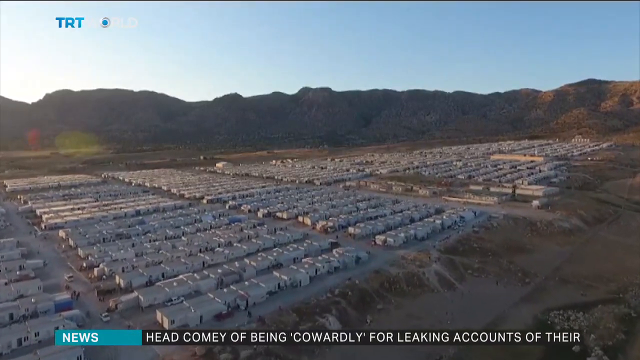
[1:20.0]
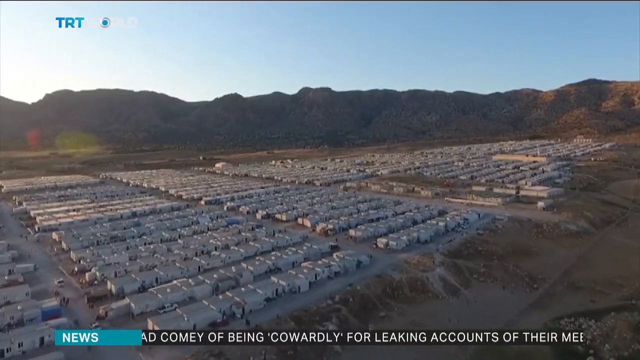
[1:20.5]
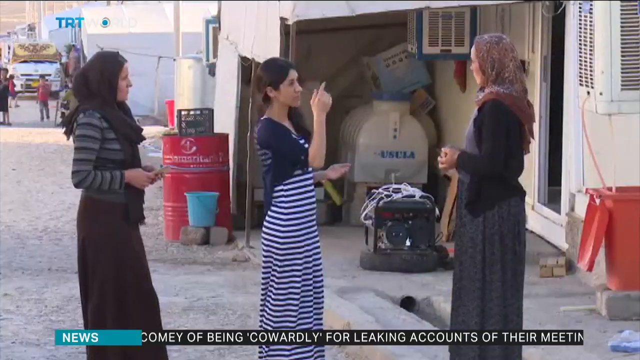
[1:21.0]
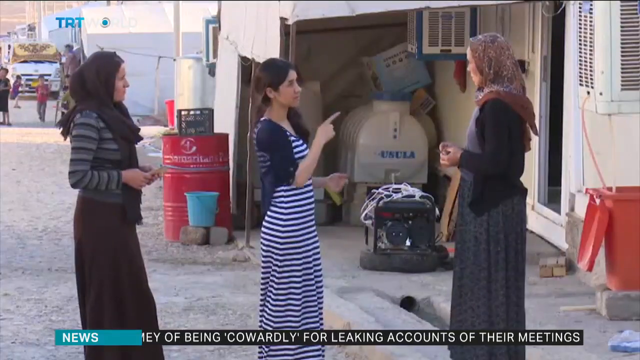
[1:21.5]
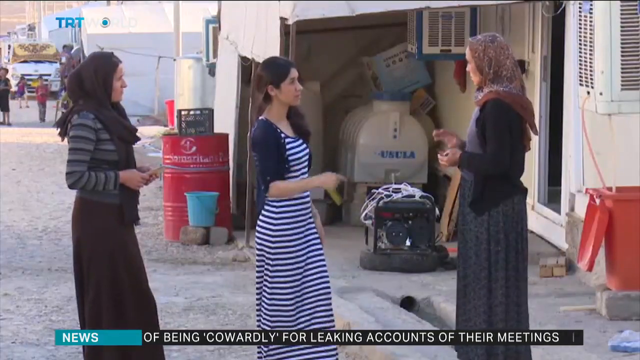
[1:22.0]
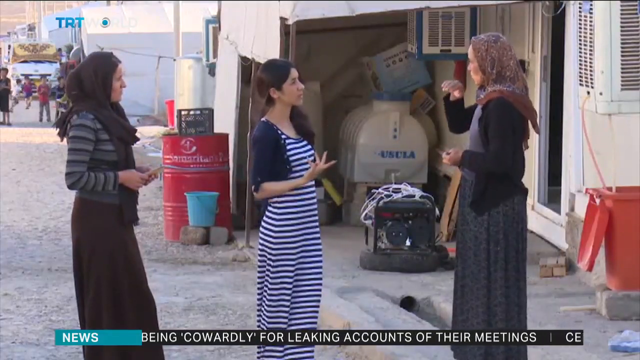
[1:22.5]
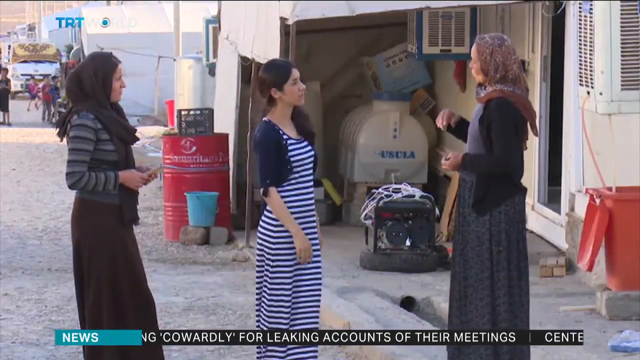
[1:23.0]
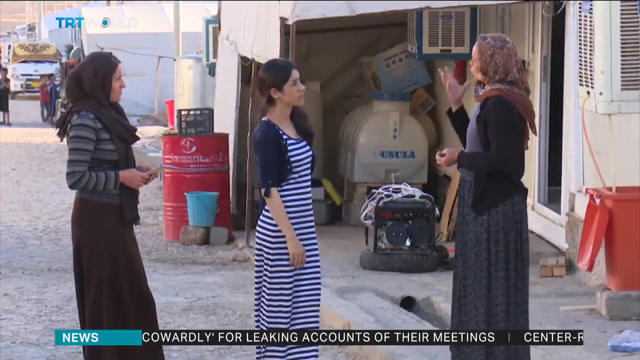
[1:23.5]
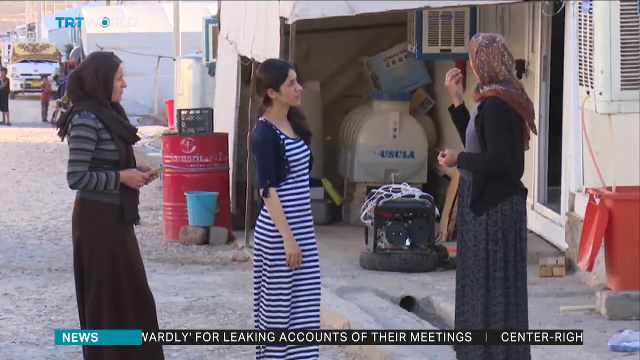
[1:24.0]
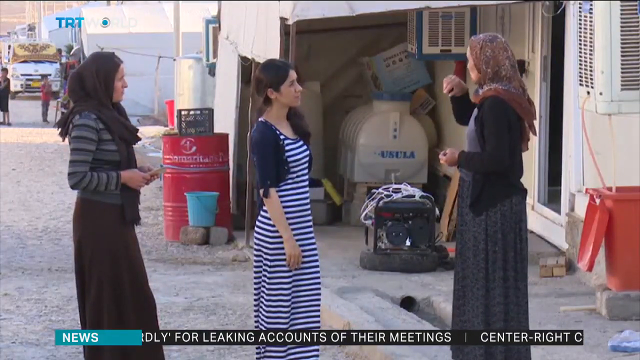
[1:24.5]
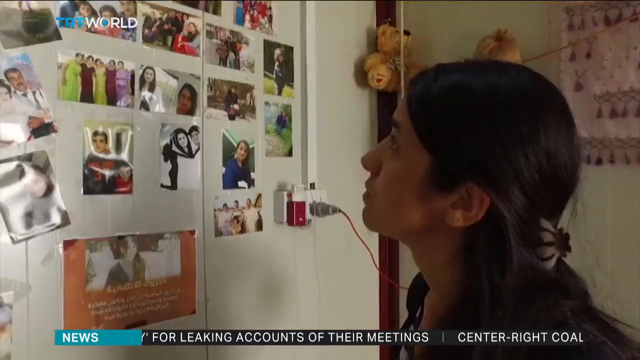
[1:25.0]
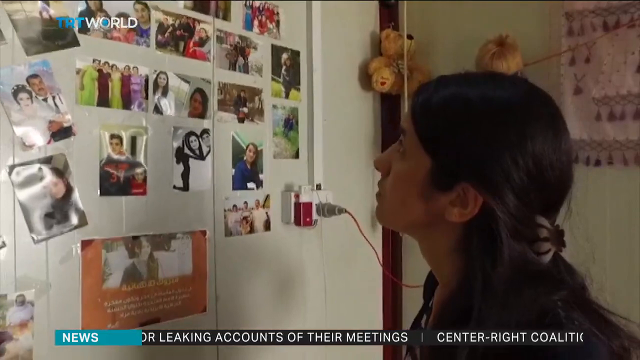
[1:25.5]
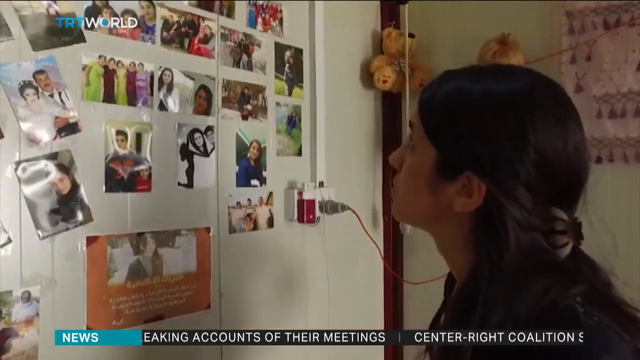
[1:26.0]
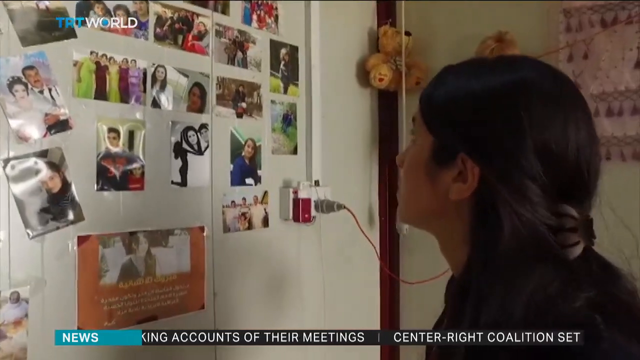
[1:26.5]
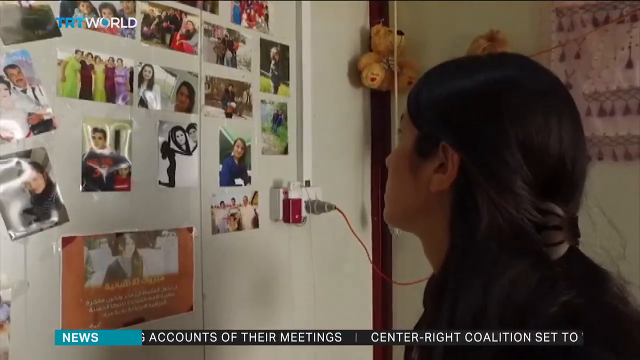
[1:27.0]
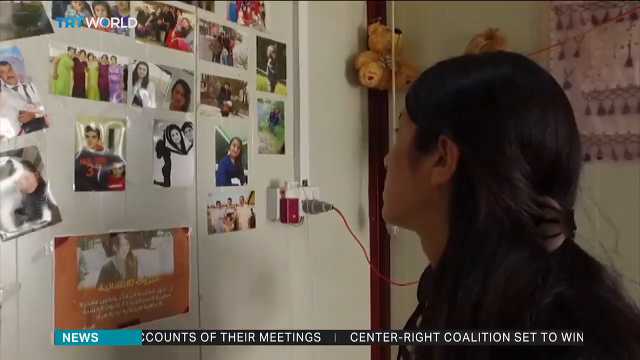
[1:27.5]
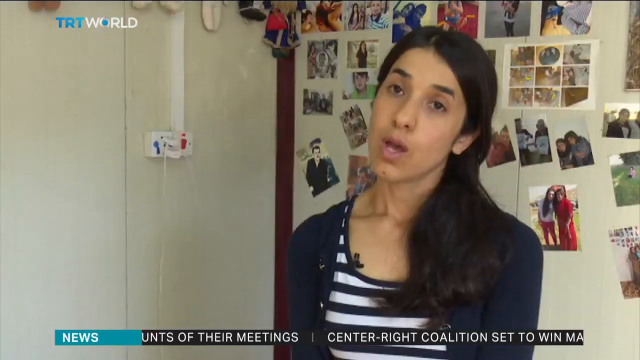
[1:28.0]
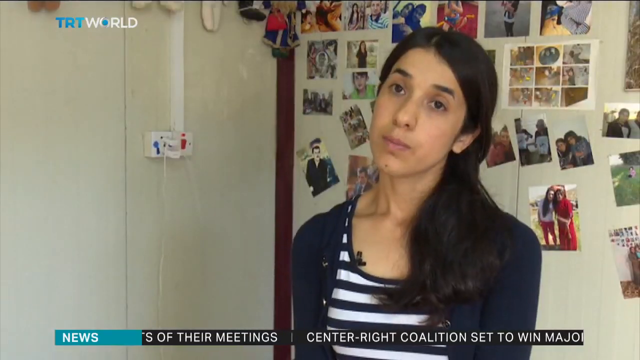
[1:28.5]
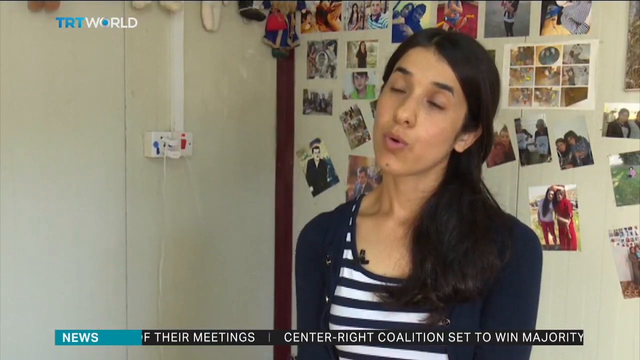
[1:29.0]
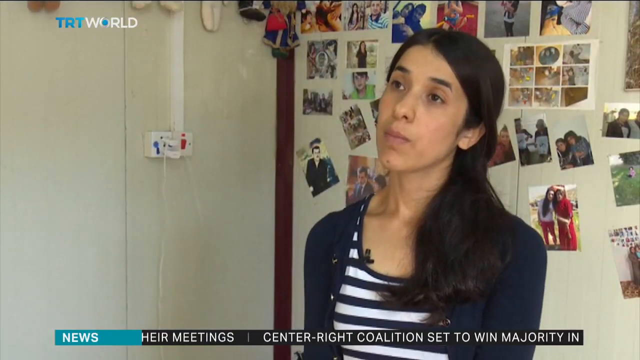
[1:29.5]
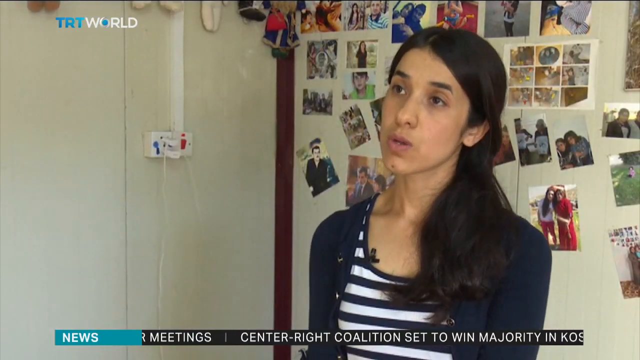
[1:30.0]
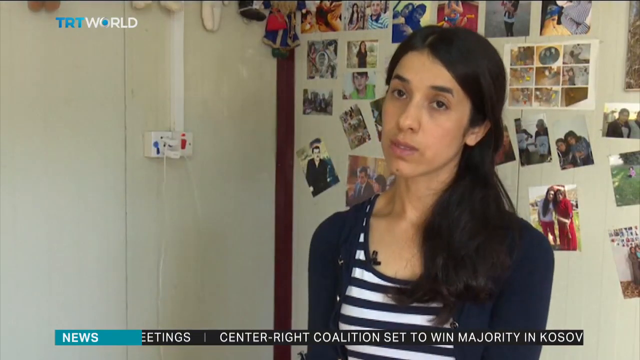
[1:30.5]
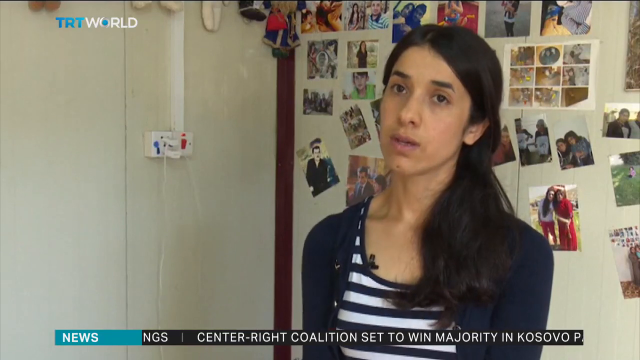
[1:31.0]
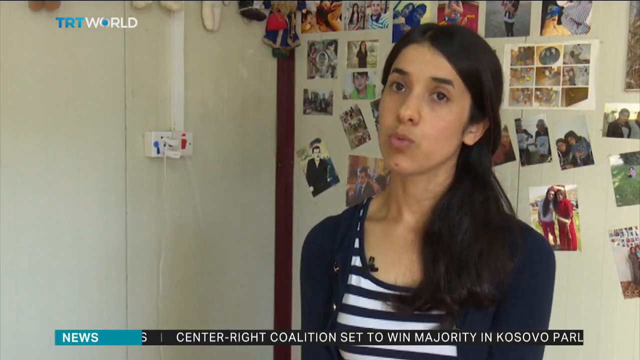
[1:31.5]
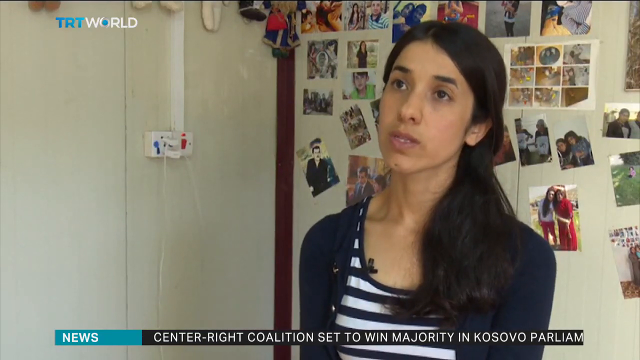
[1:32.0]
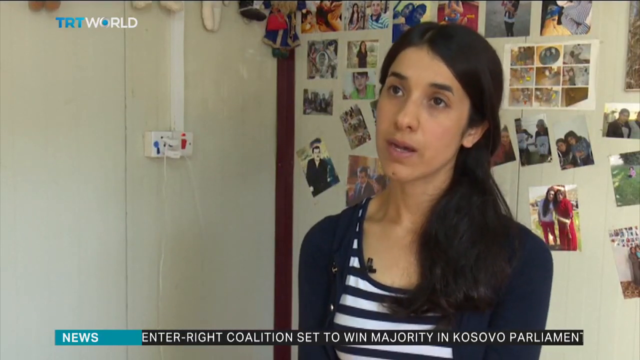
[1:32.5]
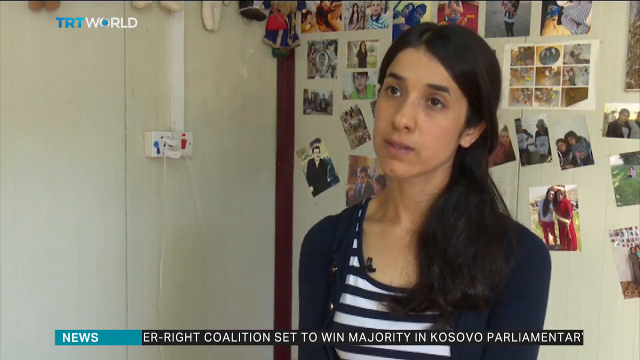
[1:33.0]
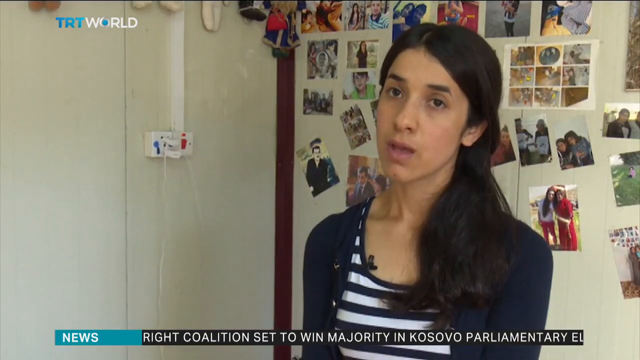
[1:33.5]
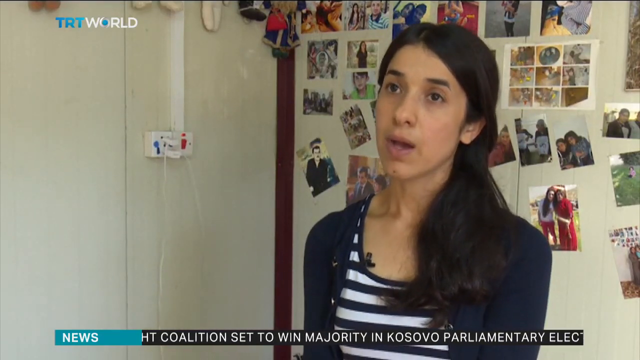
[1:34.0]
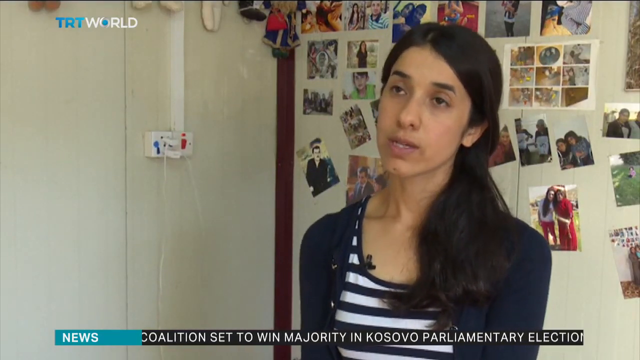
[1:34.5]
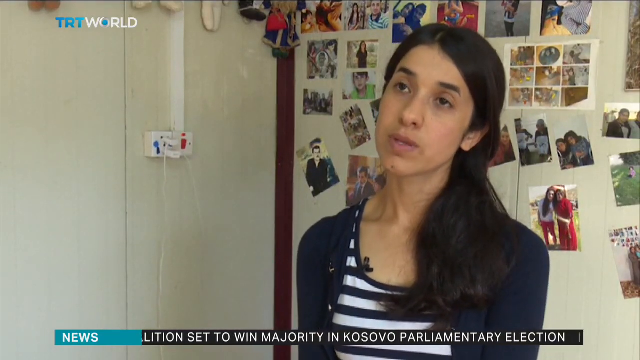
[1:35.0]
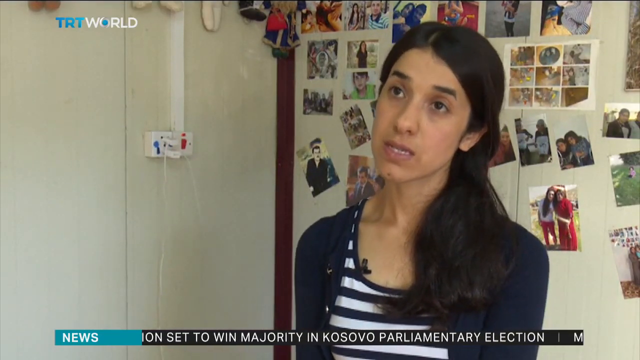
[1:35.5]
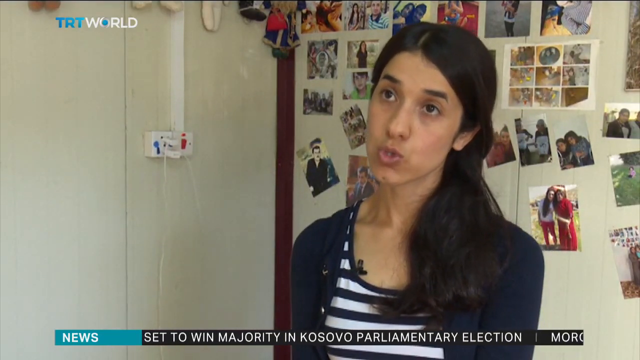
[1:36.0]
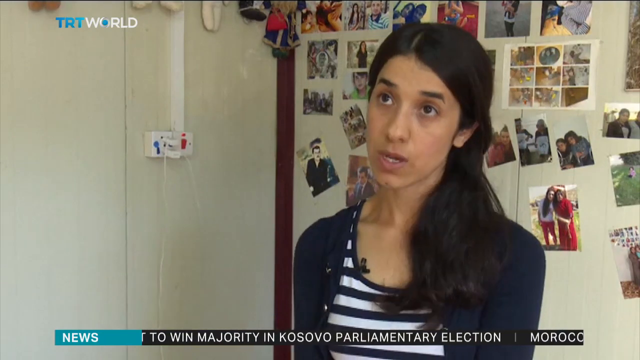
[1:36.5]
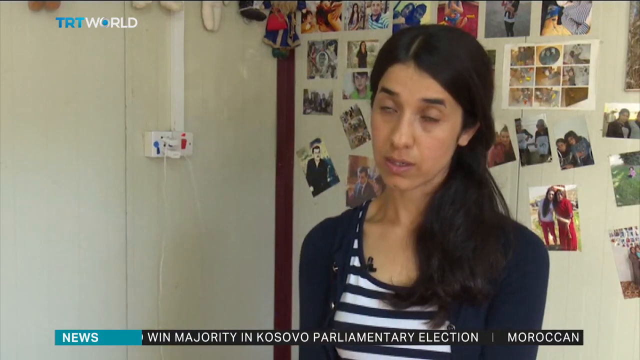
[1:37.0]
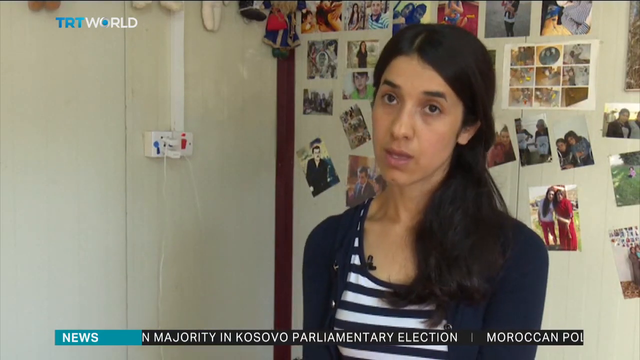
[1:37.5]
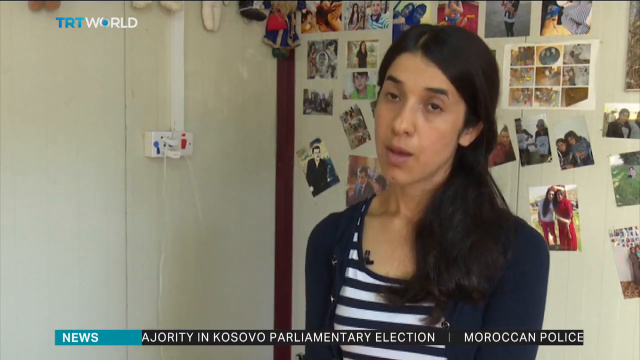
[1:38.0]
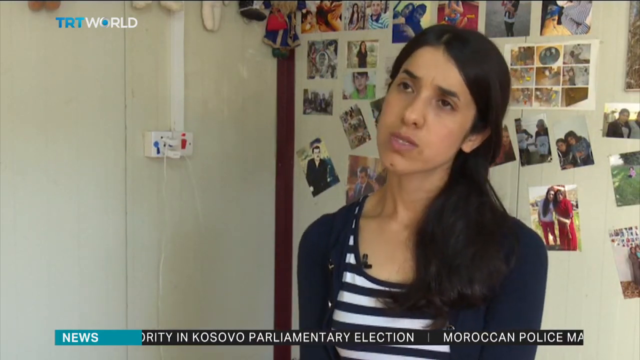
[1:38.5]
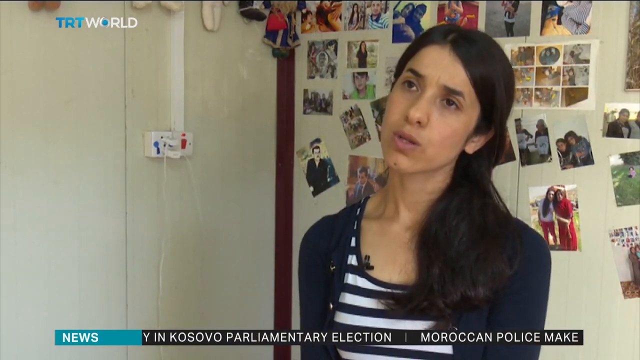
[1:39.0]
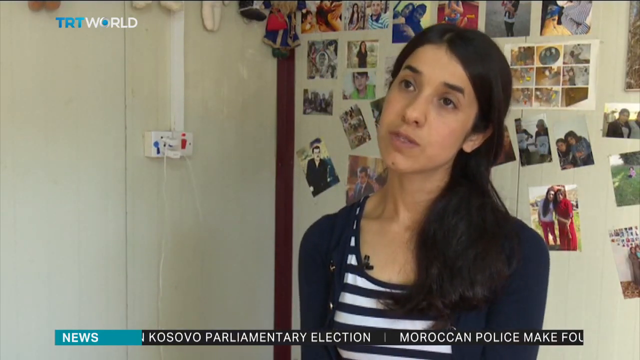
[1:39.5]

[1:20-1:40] The formerly enslaved woman wears different attire: a blue shrug and a white and blue striped dress, with what appears to be a microphone attached to her dress. She has dark, shiny hair, and her eyes still look weak and sad. She is a small, petite woman and still looks tired, weary and worn out. She talks as if to someone interviewing her; the interviewer is not visible, though they look like they are using sign language. She looks over several pictures hanging on a white wall with brown wood detailing, and there is a bear in the corner of the wall. In one of the shots during the interview, another woman wears a brown head covering and brown and white attire.